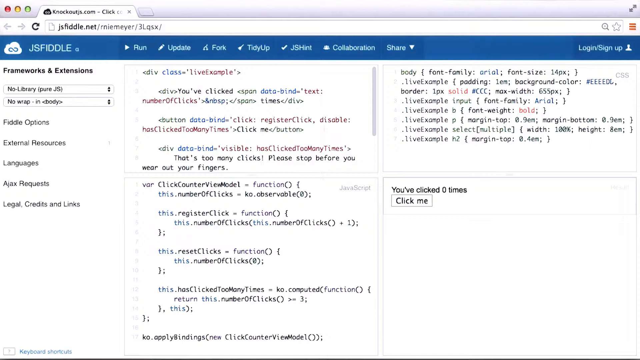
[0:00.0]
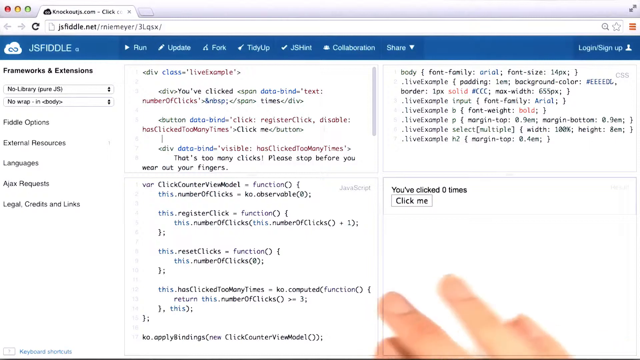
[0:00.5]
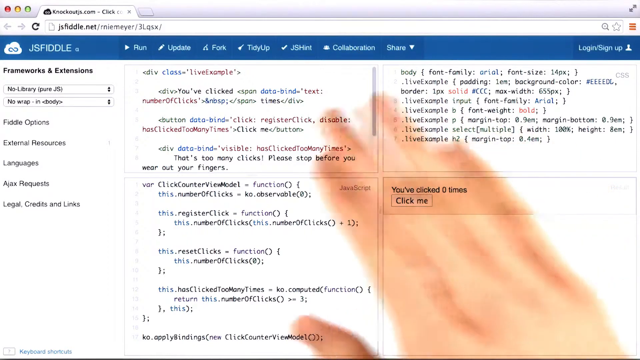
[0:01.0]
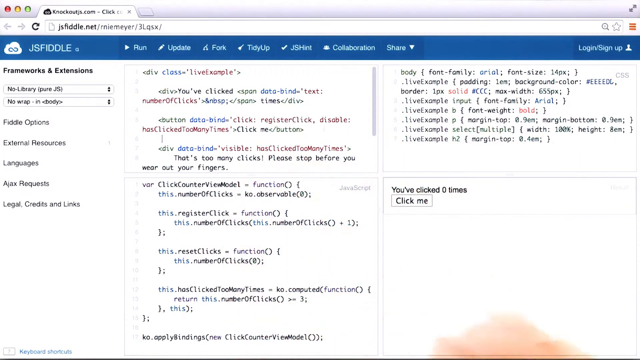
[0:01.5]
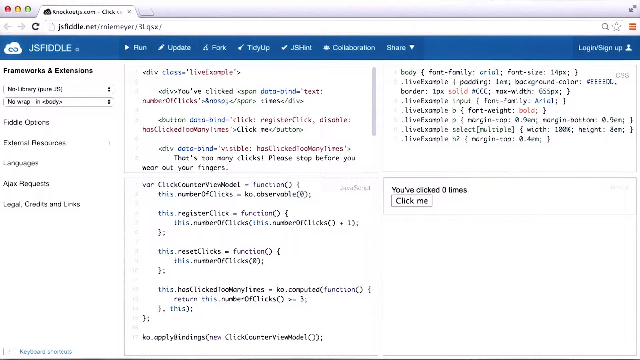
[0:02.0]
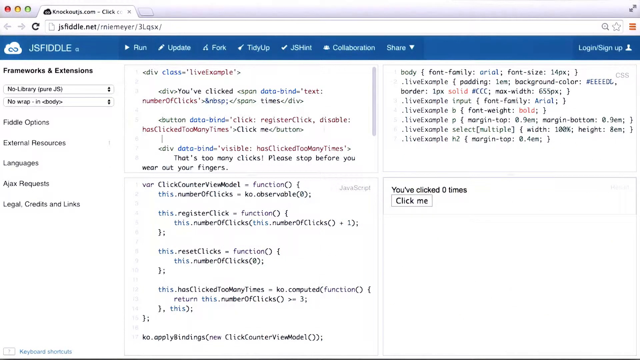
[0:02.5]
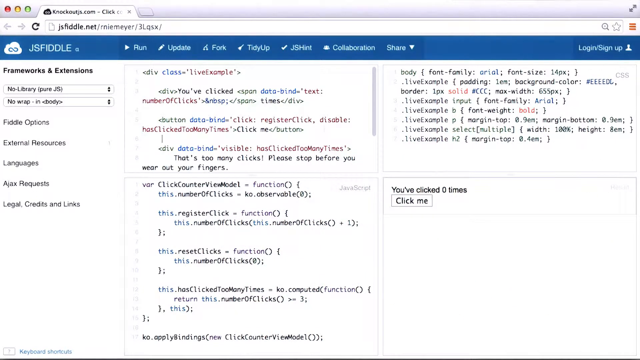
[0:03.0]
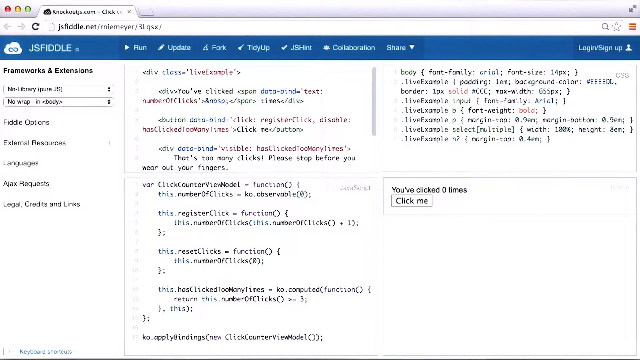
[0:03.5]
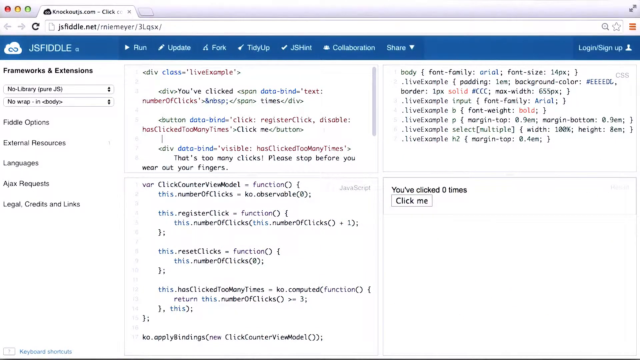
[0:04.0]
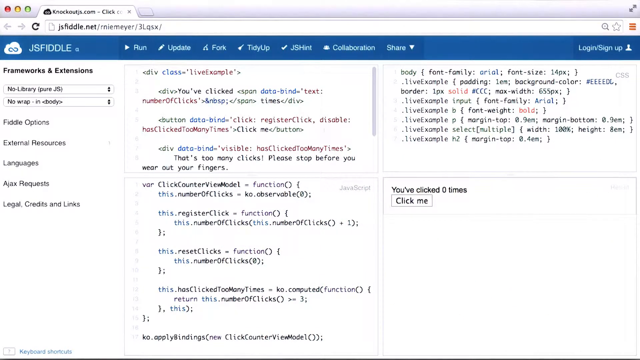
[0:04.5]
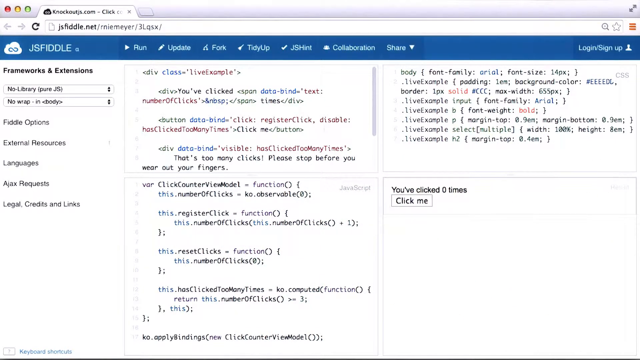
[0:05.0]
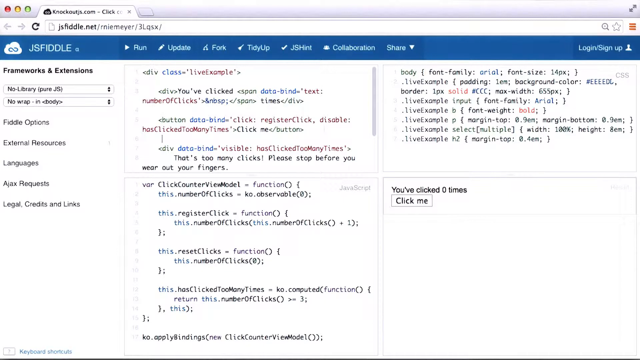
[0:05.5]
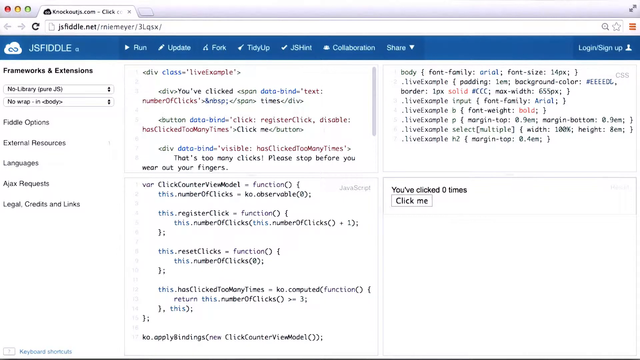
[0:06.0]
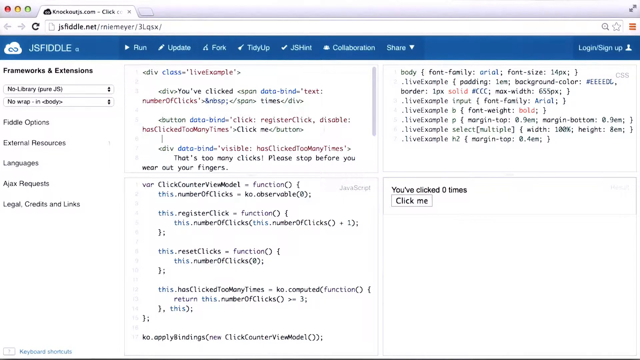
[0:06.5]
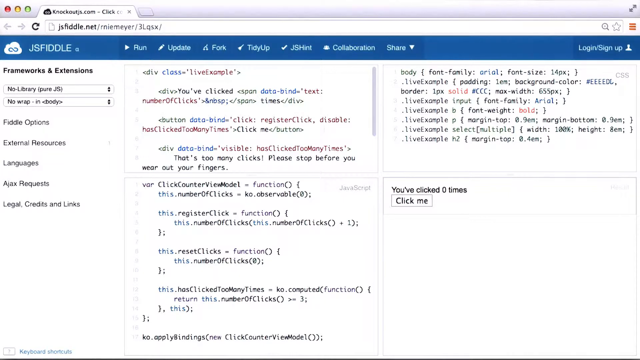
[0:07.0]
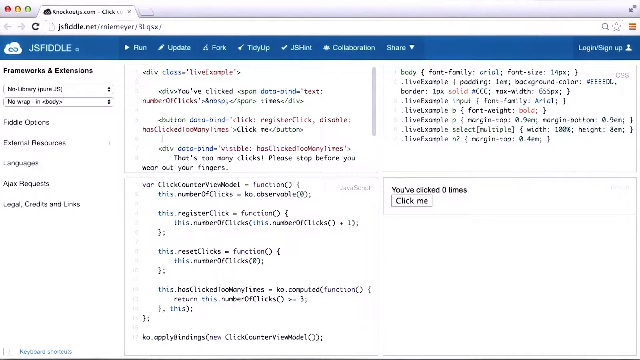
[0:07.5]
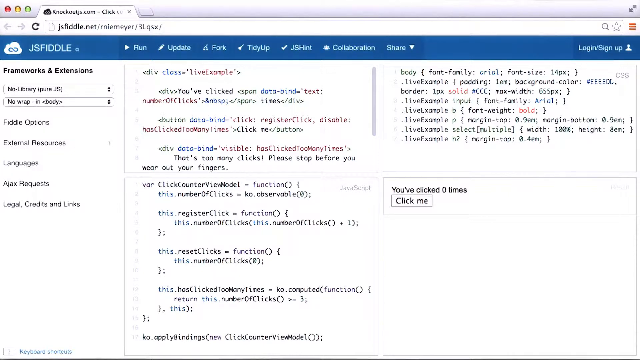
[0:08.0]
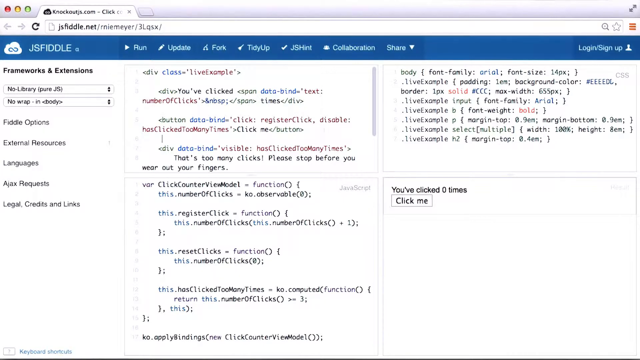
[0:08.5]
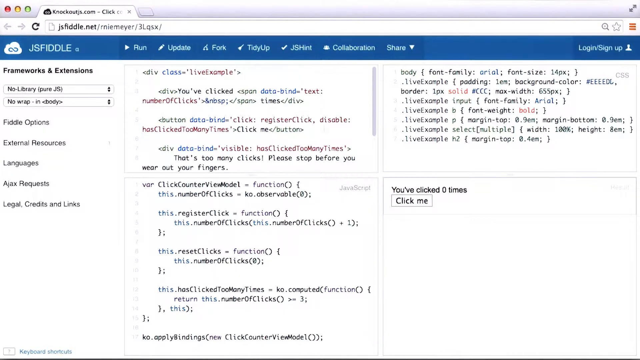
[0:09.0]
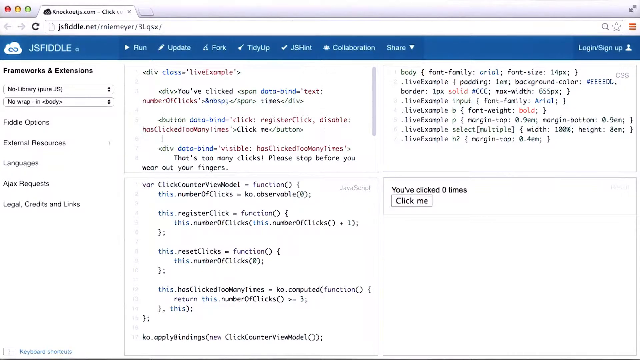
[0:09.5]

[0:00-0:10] A coding page of some sort of app, JSFiddle, is shown. Along the top menu are "Run", "Update", "Fork", "Tidy up", "JS hint", "Collaboration", "Share", "Log in" and "Sign up". Along the side menu are "Frameworks and extensions", "Fiddle options", "External resources", "Languages", "AJAX requests" and "Legal, credits and links". A hand is moving on the screen, apparently as someone teaches how to create something. Code visible on the page includes "data bind", "visible", "click counter", "view mode", "function" and "body", along with a lot of other data, and there is a "Click me" button.